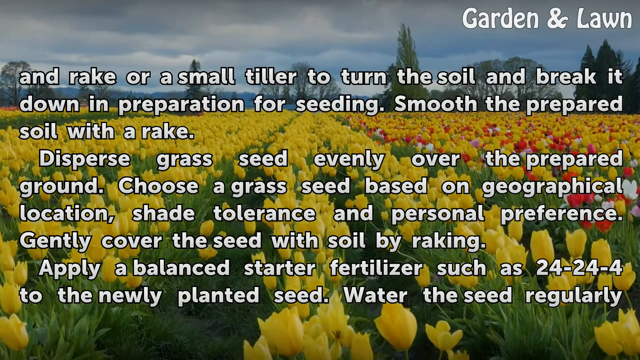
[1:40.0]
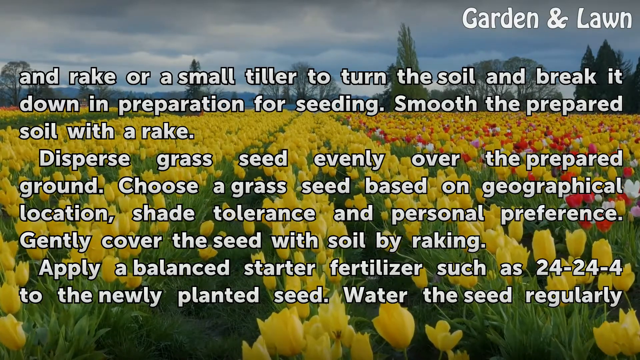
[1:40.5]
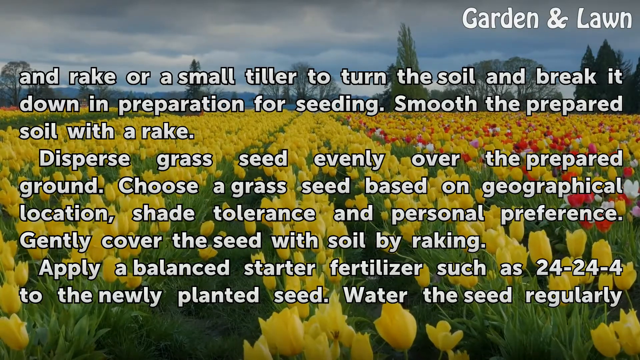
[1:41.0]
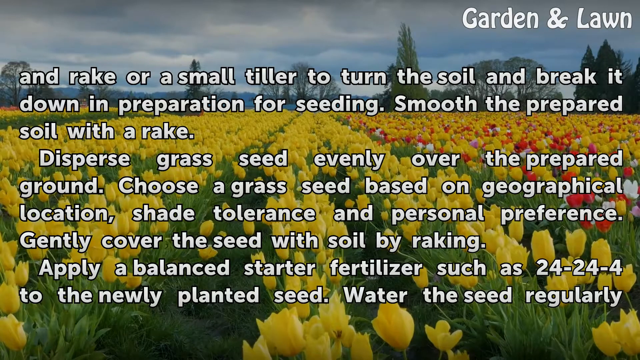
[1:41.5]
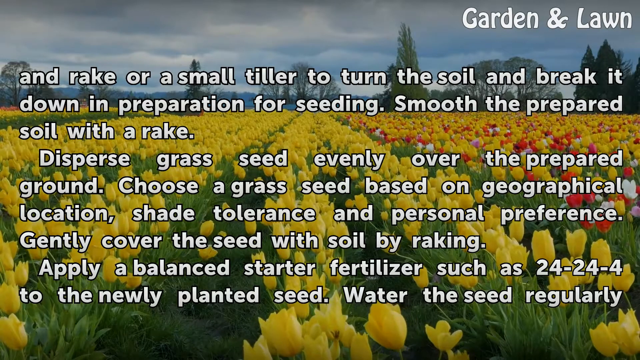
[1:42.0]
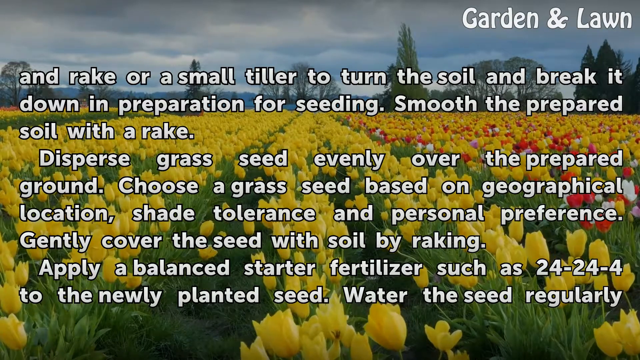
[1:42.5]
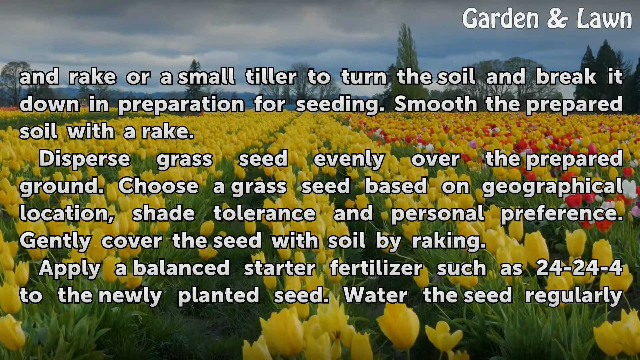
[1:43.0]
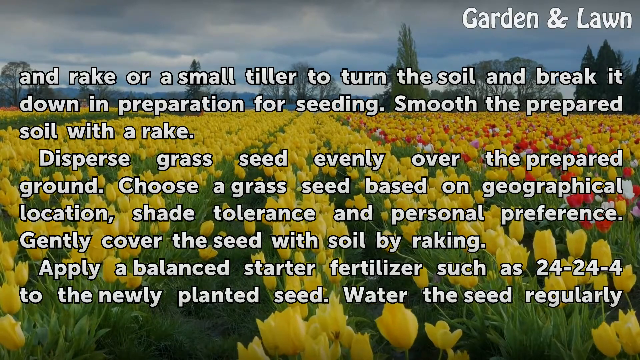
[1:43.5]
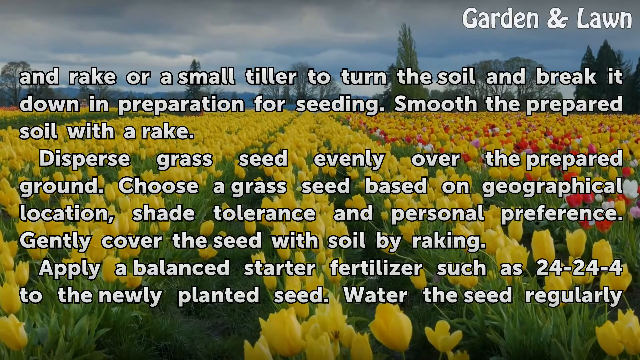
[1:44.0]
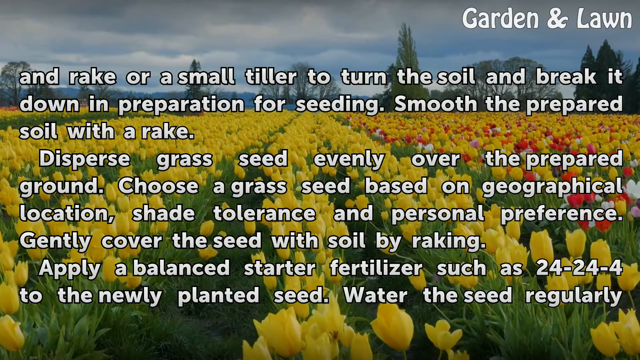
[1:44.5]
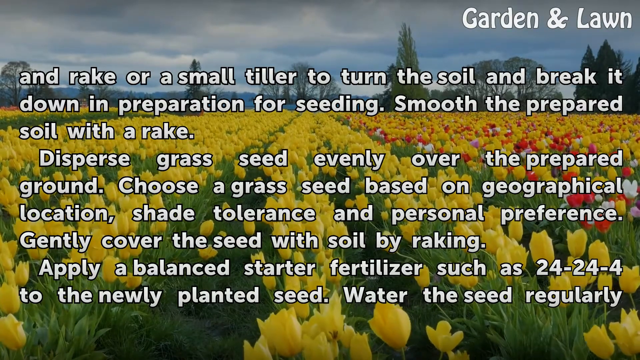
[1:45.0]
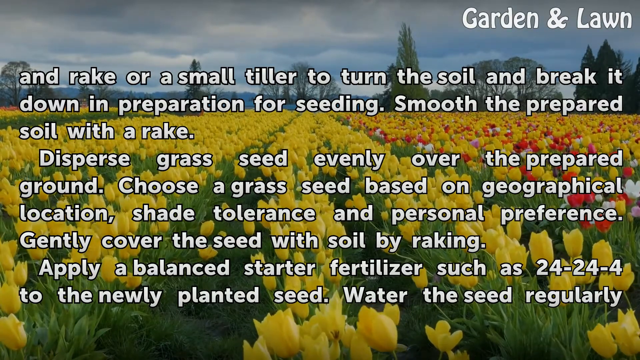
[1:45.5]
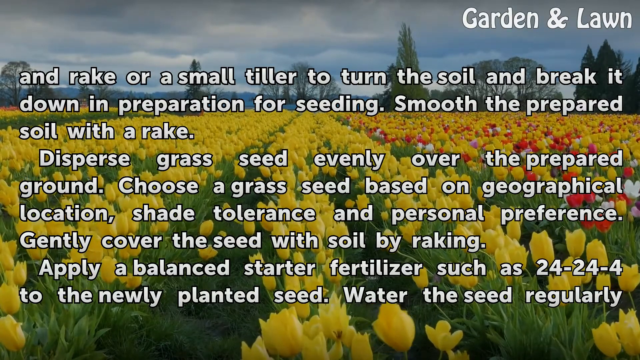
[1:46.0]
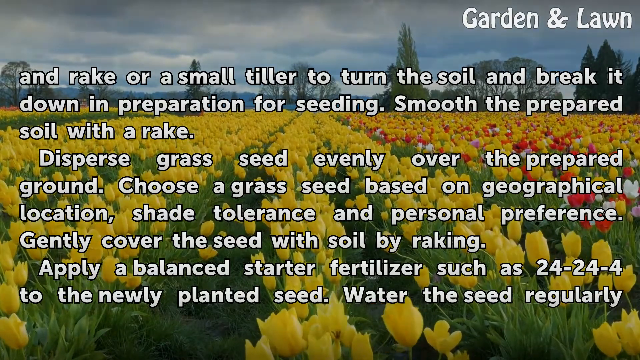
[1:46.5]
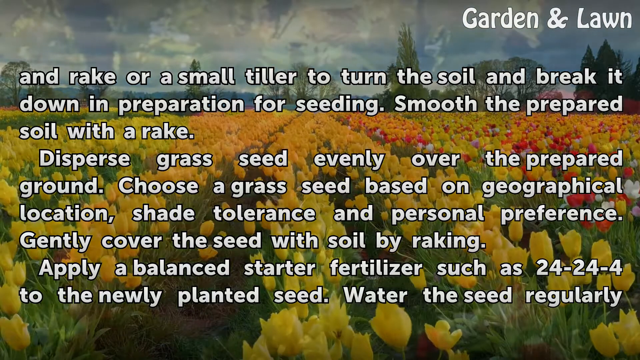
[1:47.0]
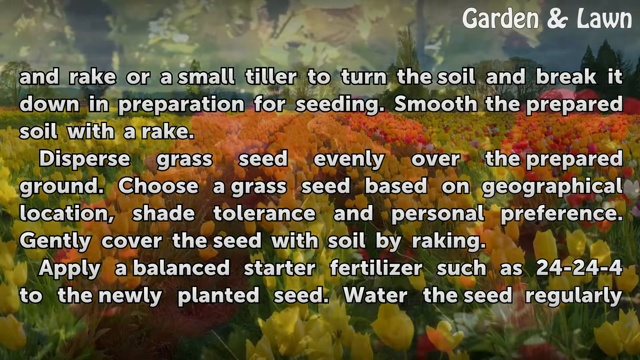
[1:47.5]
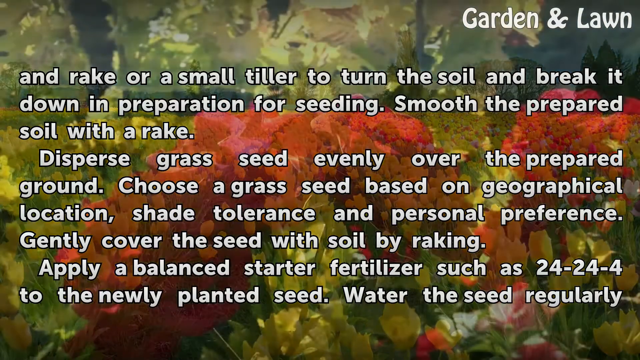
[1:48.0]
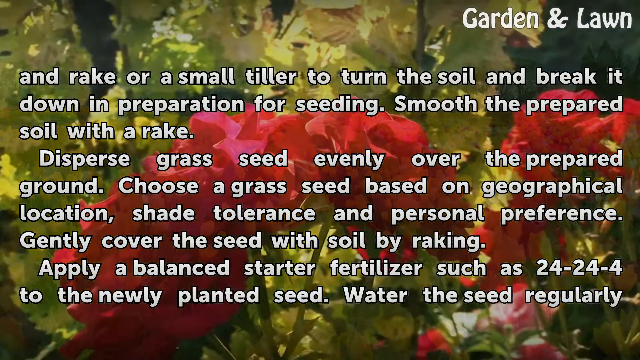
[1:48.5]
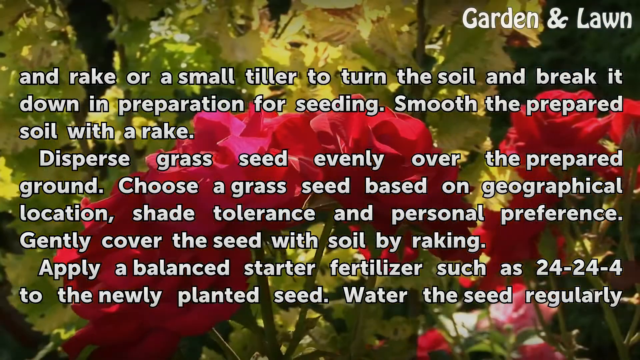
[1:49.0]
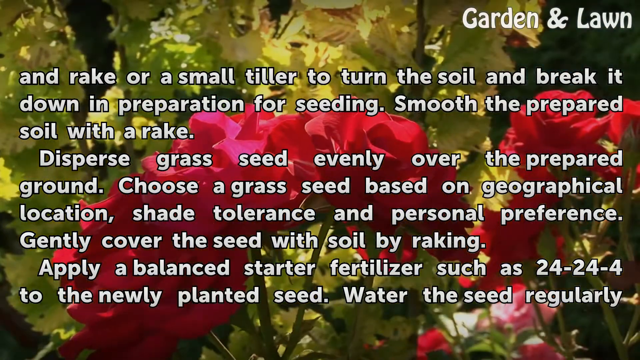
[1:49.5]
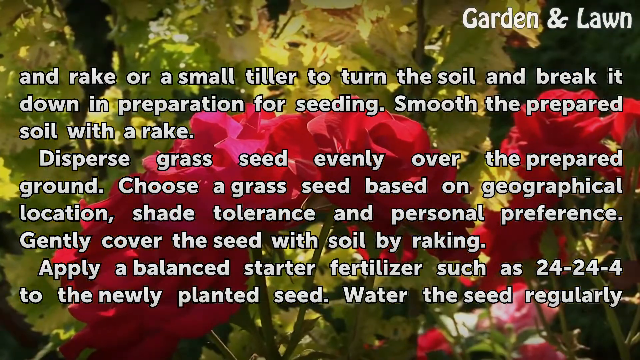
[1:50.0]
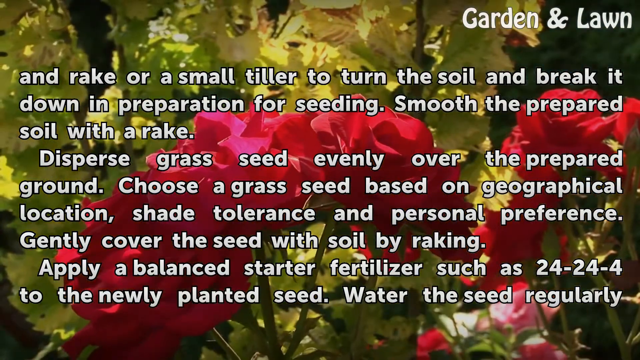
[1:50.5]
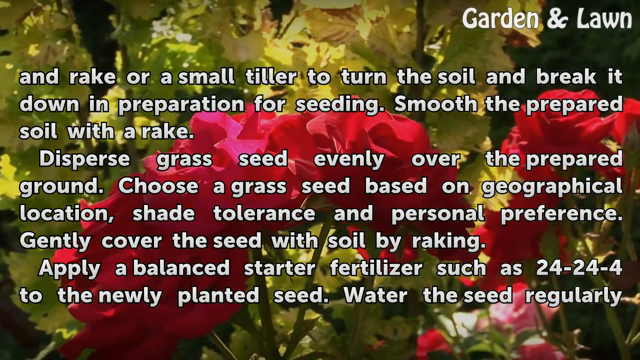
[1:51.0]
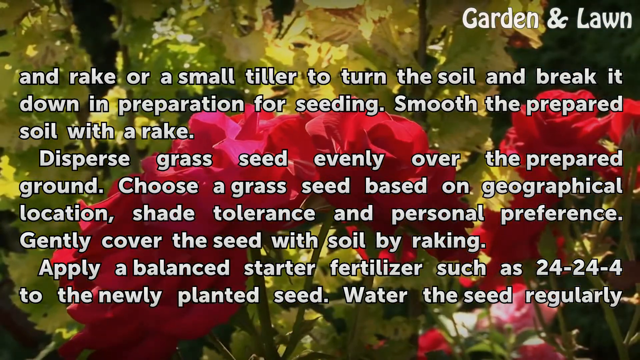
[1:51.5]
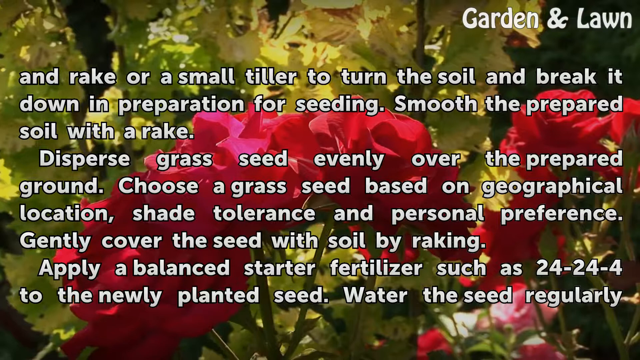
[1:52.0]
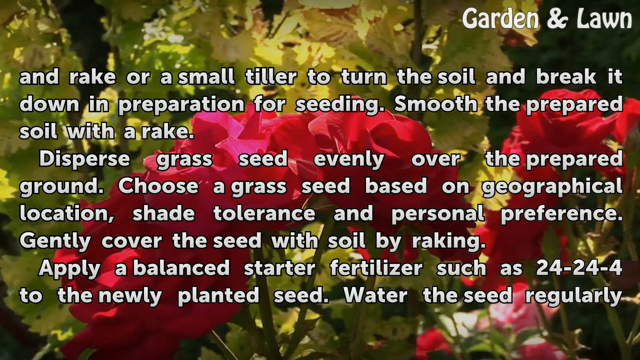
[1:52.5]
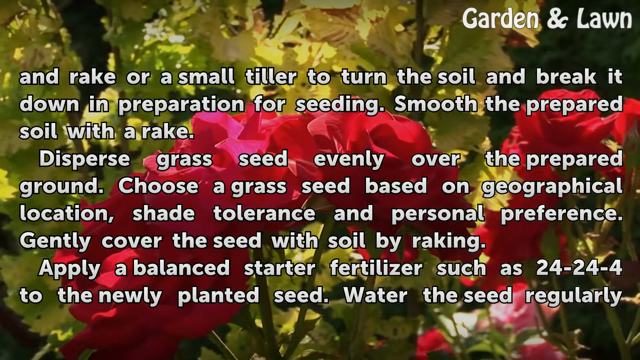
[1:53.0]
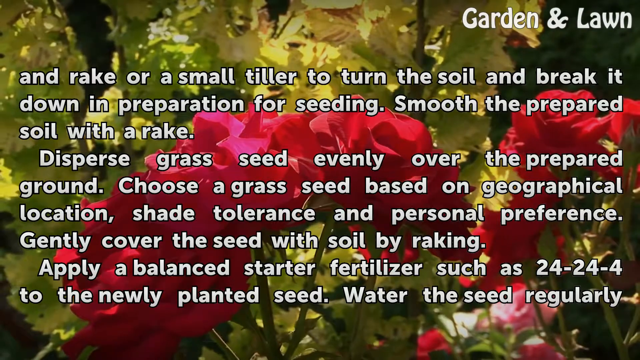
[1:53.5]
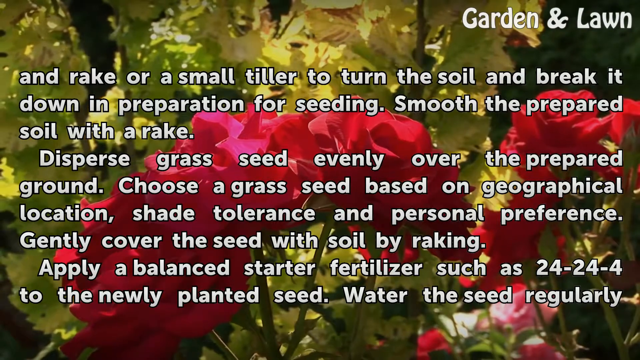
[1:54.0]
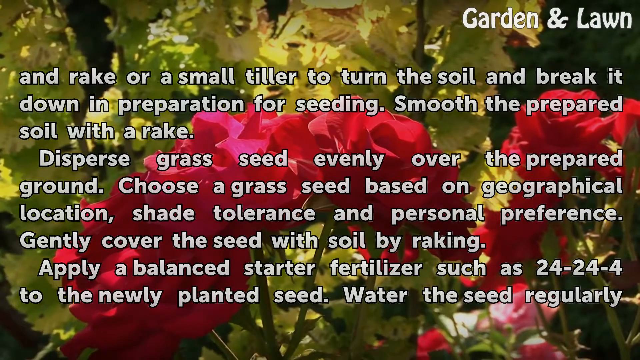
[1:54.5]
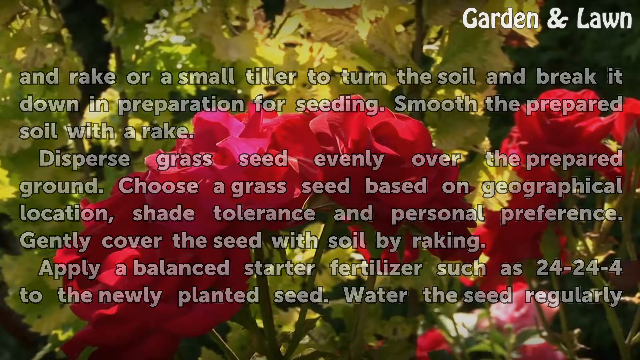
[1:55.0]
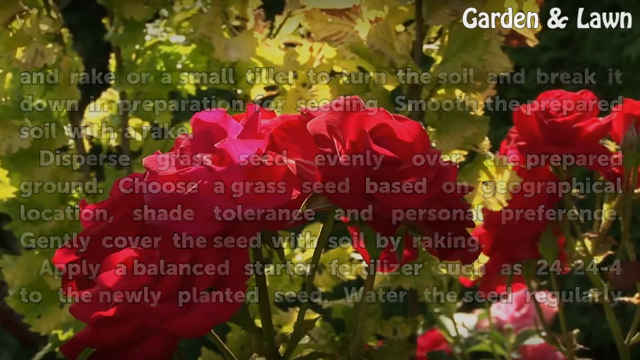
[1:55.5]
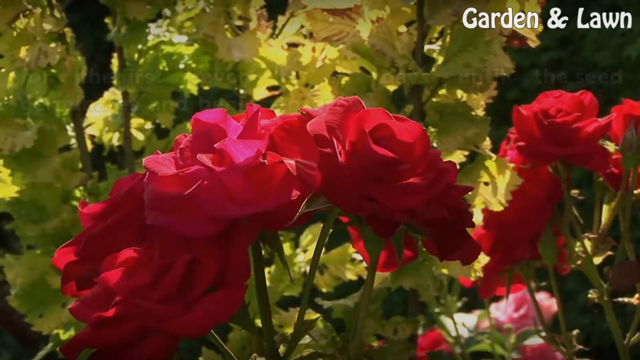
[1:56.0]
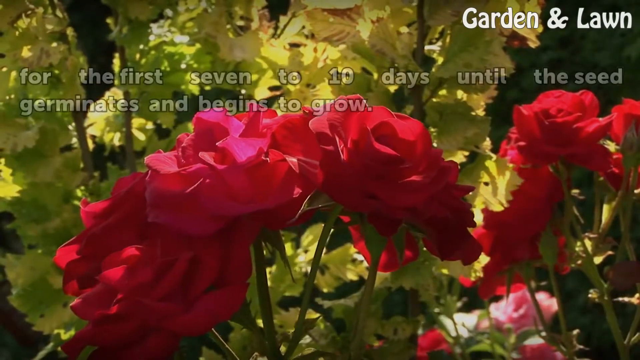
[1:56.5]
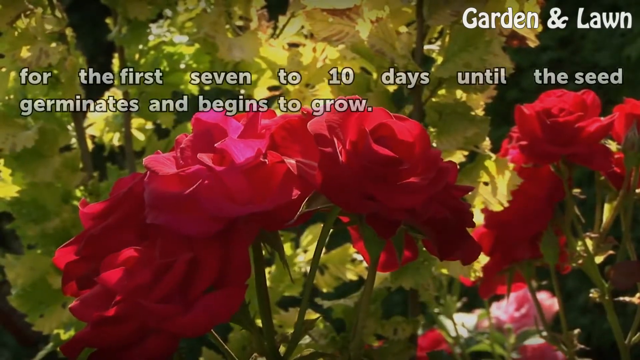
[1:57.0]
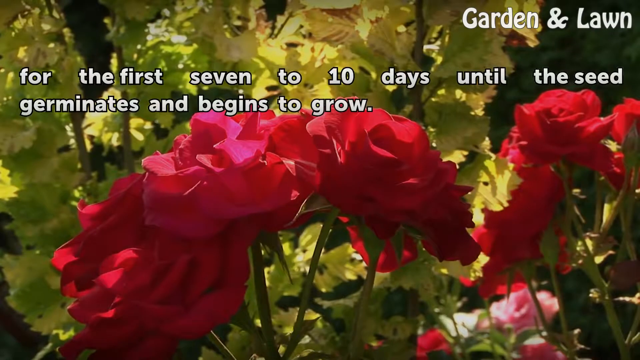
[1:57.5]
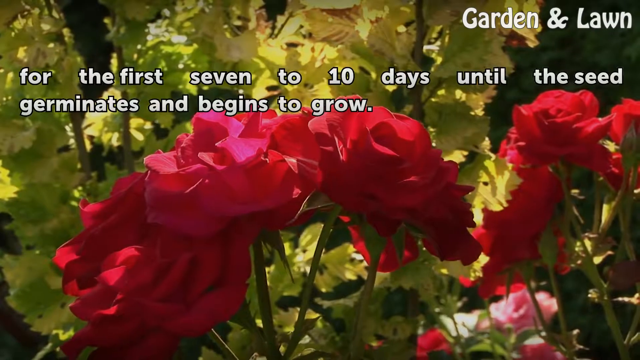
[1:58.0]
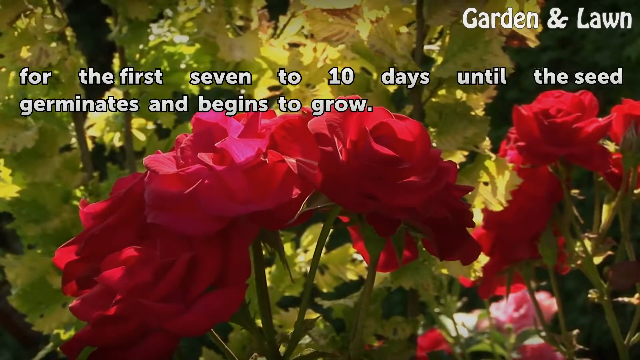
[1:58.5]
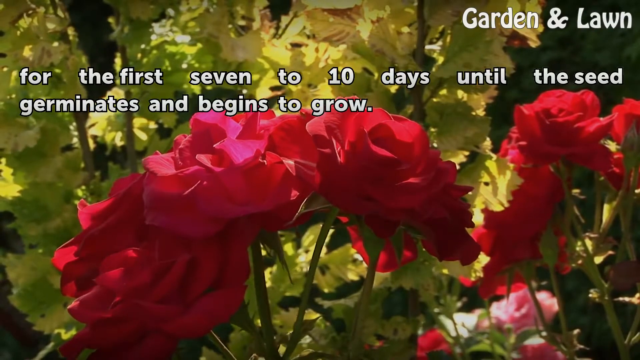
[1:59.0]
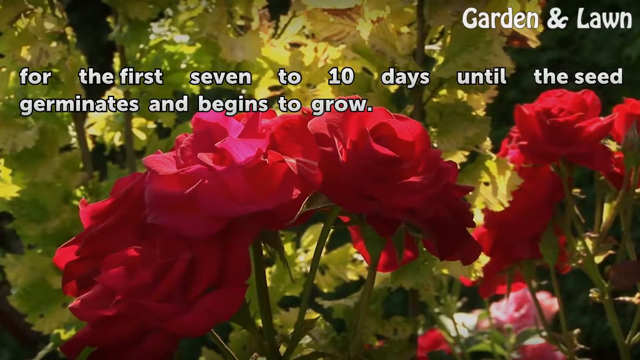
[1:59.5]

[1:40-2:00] Three hands in different shades of blue, navy blue, sky blue and light blue, appear with a message reading "70 million deaf people", "300 sign language" and "unlimited potential". Then an orange flower that looks healthy appears with a green background and the title "how to reverse effects of Roundup weed killer". A message follows saying Roundup is a herbicide widely used to control the unwanted growth of grass, weed and small brush, with glyphosate as the primary active ingredient, used in both residential and commercial applications, and that seeding an area can reverse the effect following dieback. Green with a flower is behind the message. A pink flower appears with "things you will need": trash bags, shovels, small tillers, grass seeds, straws, starter fertilizer and water. Another message says to leave the area undisturbed for 7 days, letting the Roundup work its way through the plant to the root where it becomes neutralized in the soil, gather the dead grass and weed, pull dead roots from the ground, bag the dead vegetation and dispose of it properly, and work the soil to prepare it for seeding using a shovel. Behind this message is a background of green and yellow flowers with red and white. A further message says to use a small tiller to turn the soil and break it down in preparation for seeding, smooth the prepared soil with a rake, and disperse grass seed evenly over the prepared ground.